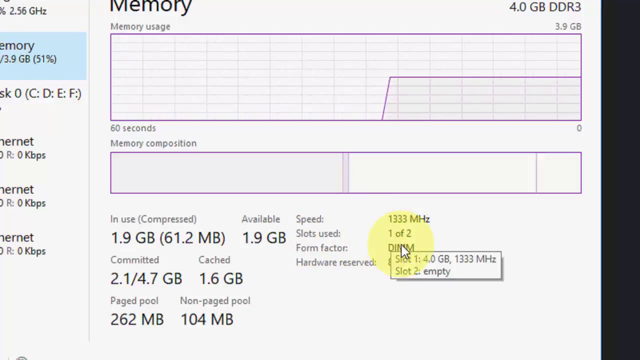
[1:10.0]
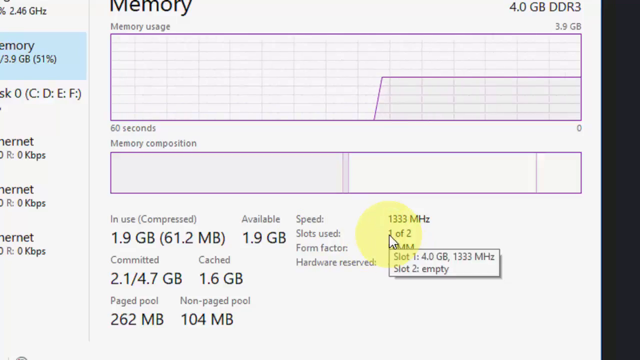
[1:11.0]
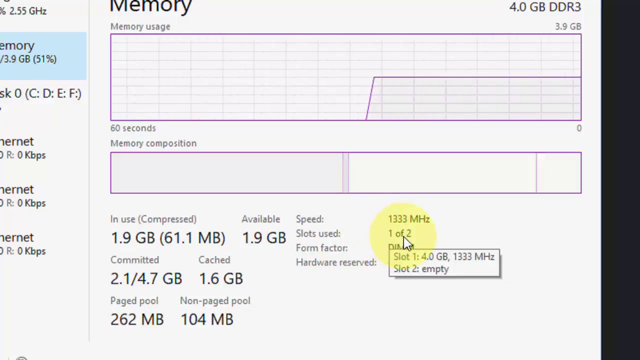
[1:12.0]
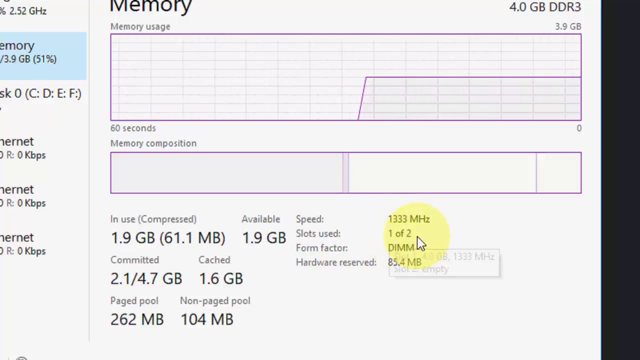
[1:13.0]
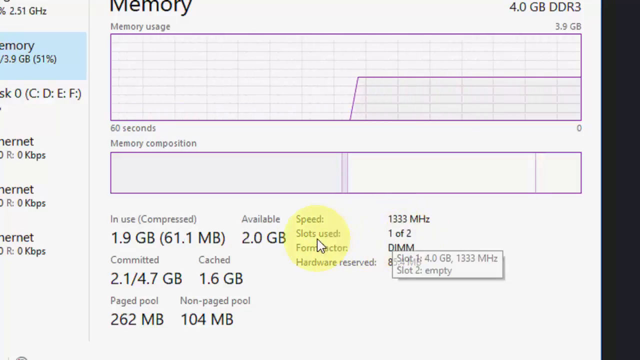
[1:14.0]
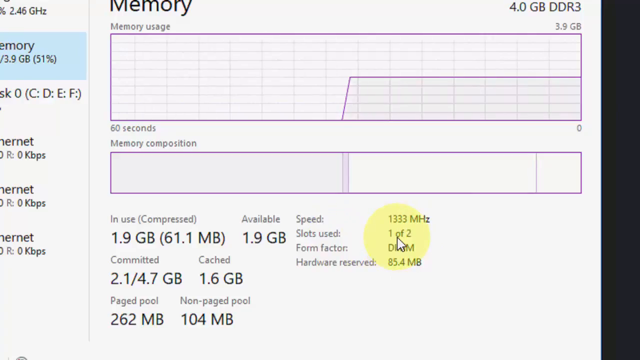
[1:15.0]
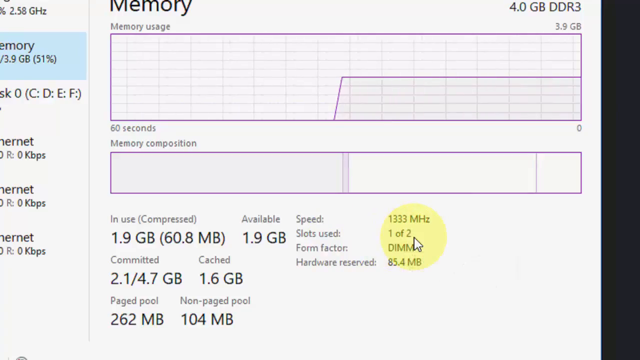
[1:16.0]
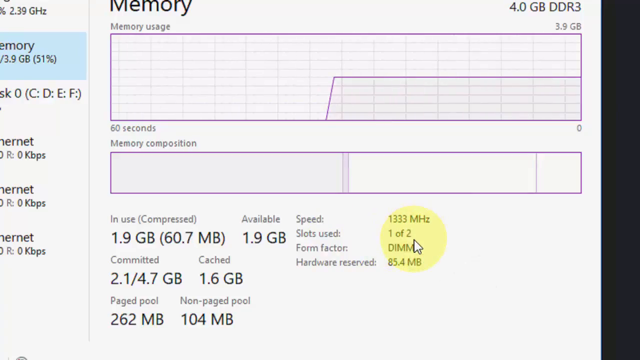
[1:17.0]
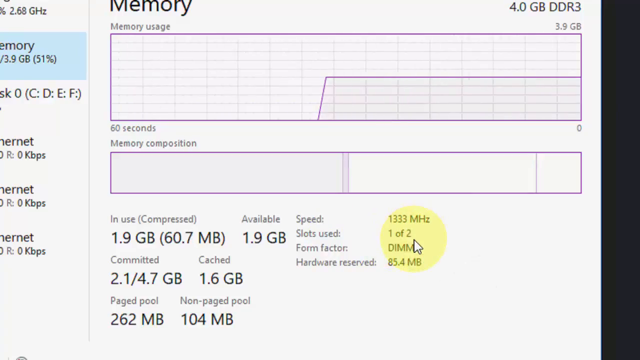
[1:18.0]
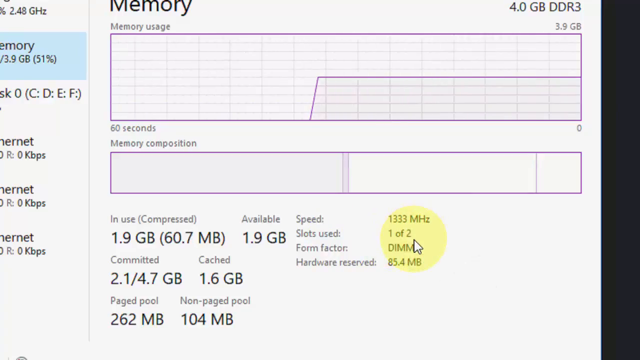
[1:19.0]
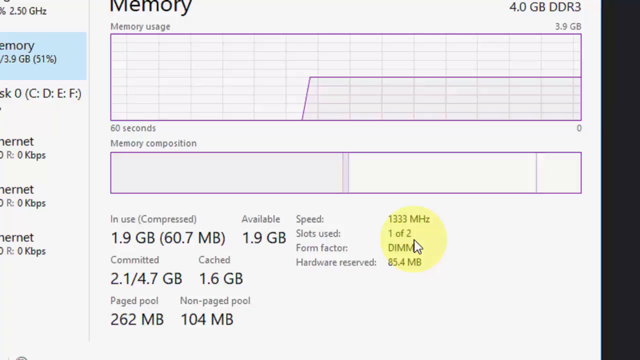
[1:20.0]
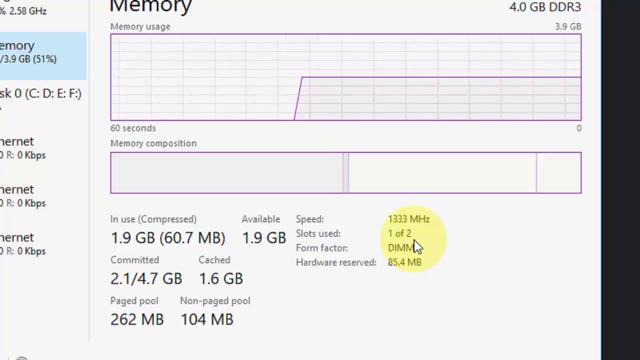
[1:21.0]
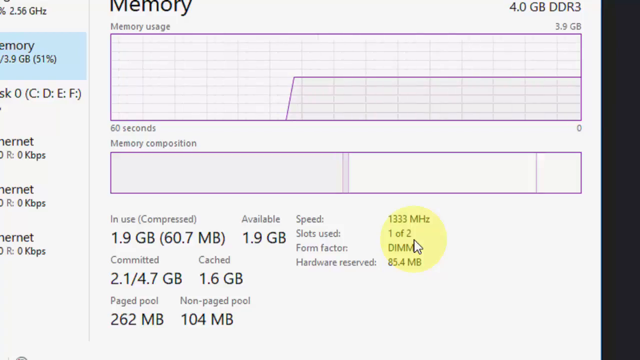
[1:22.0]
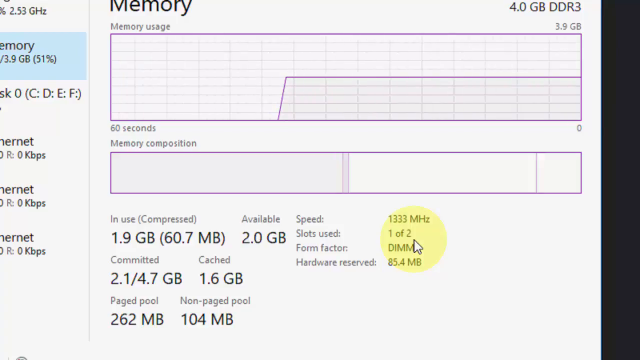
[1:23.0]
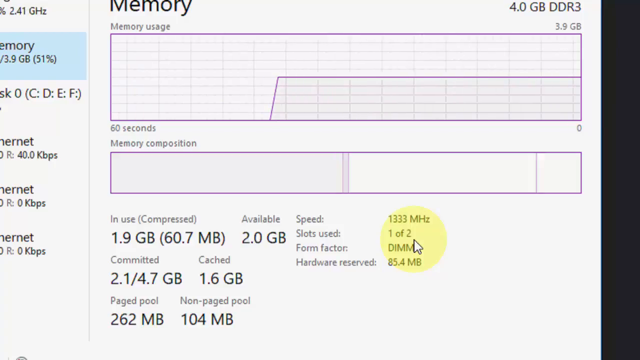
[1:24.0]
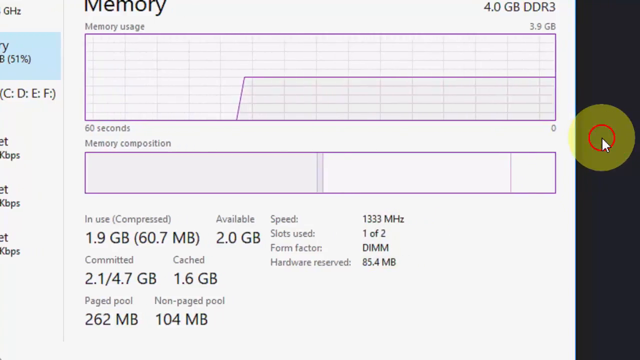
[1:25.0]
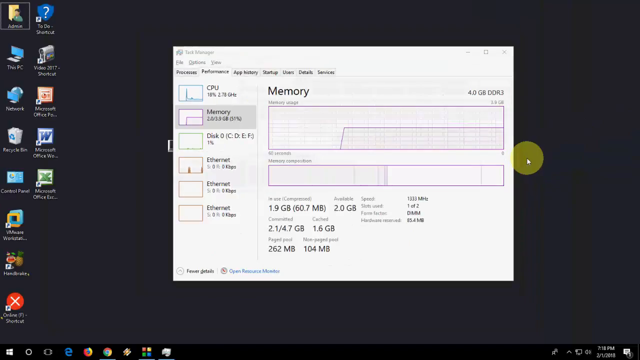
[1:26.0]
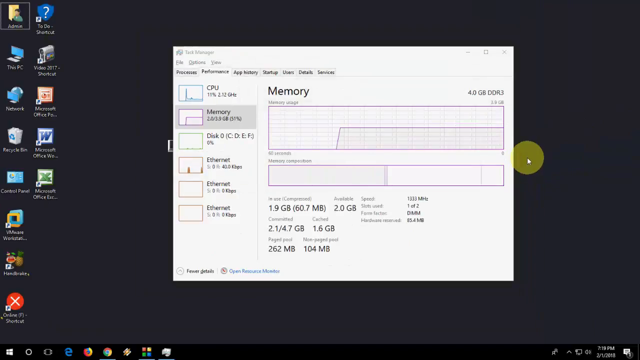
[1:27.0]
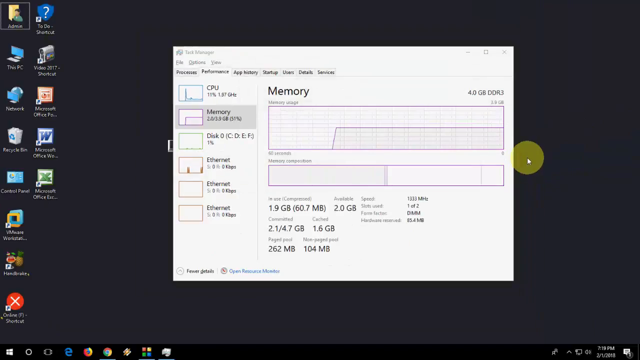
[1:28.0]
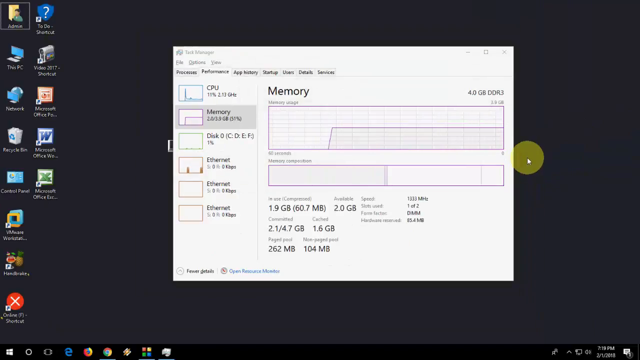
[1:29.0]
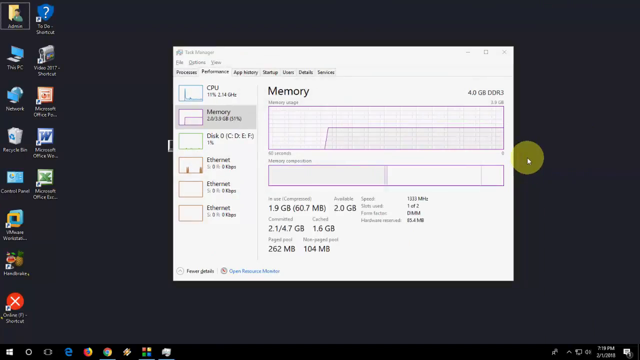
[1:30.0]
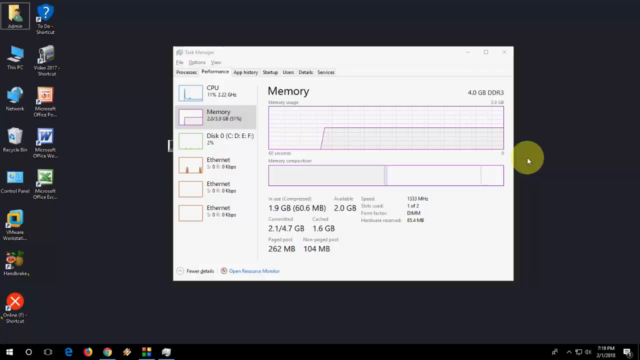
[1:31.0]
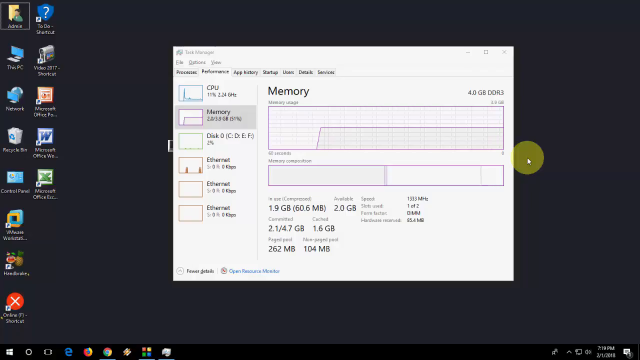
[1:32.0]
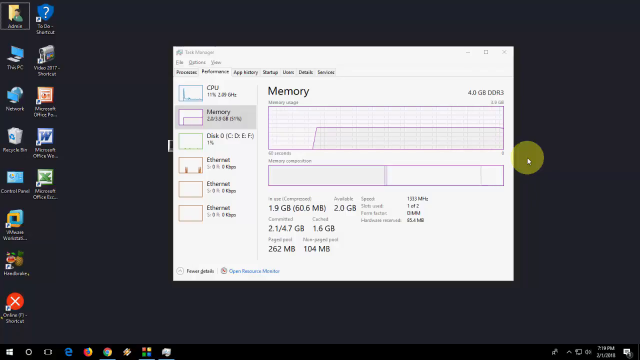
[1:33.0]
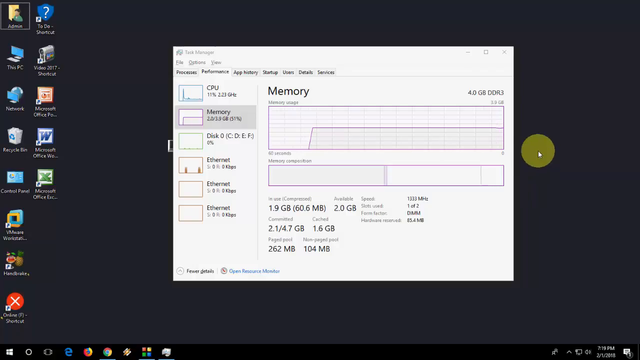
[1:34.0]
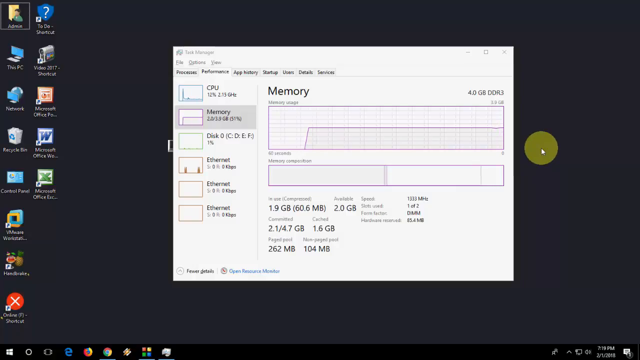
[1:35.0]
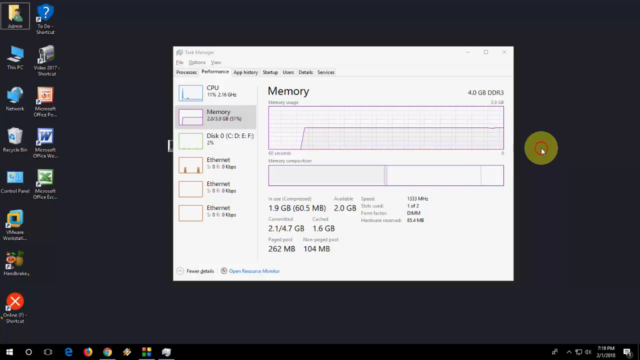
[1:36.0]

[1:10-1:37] The user seems to focus on the line saying that one of two slots is being used, with the mouse on that line. The user then moves the camera away to show the entire desktop, and it stays like that for a few seconds before the video ends abruptly.